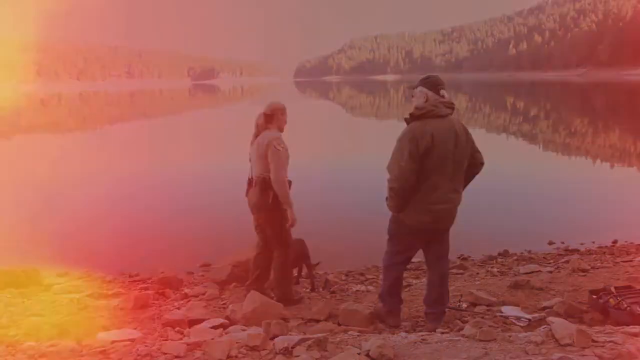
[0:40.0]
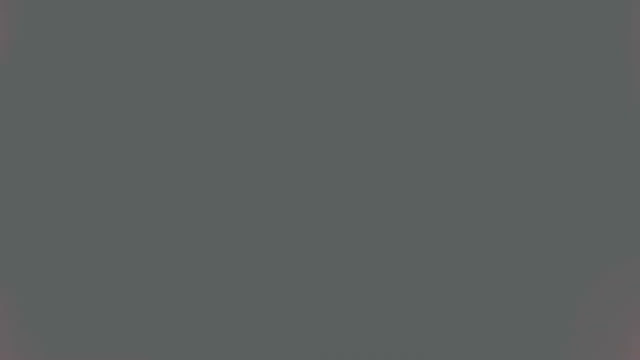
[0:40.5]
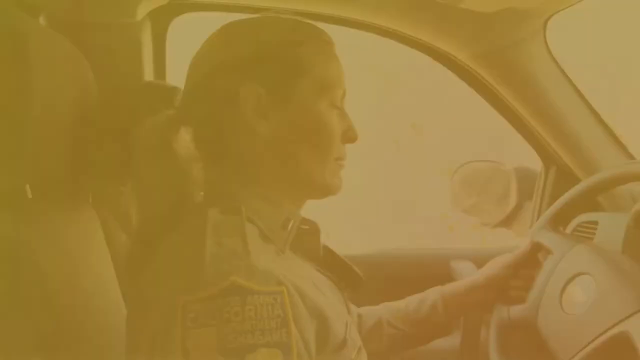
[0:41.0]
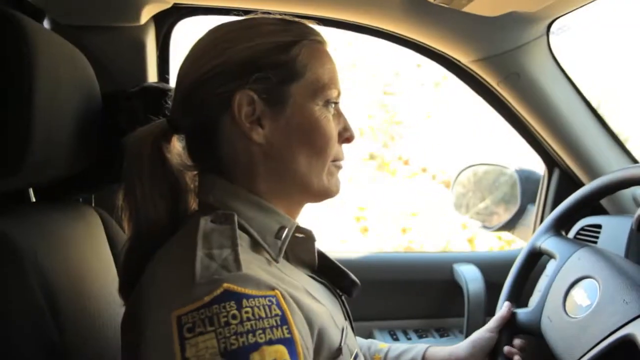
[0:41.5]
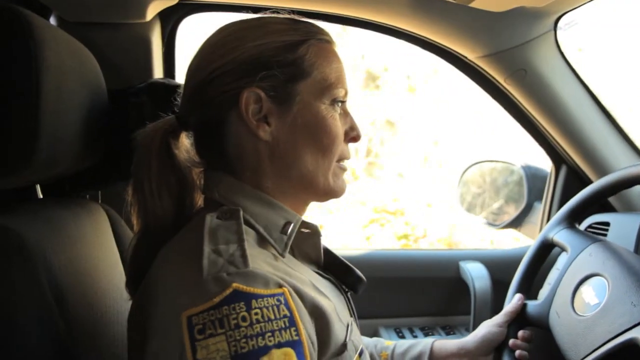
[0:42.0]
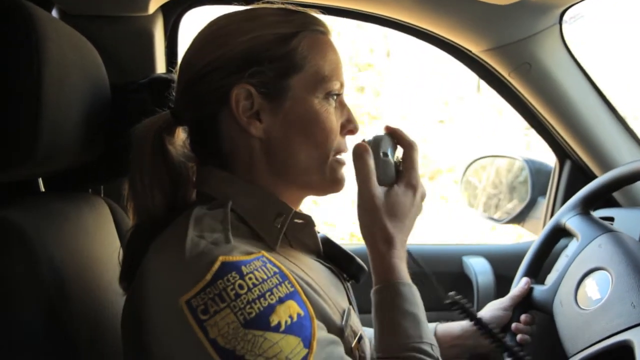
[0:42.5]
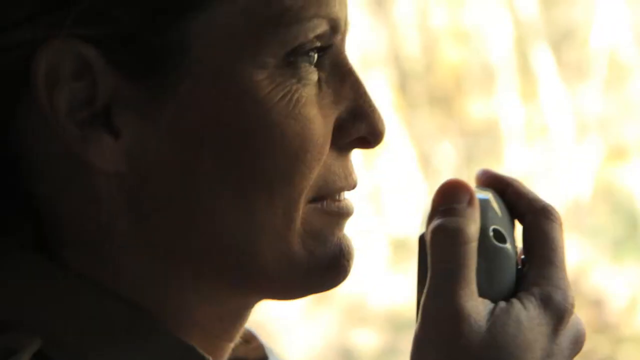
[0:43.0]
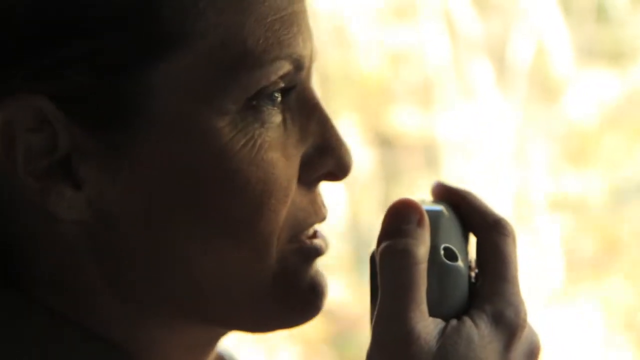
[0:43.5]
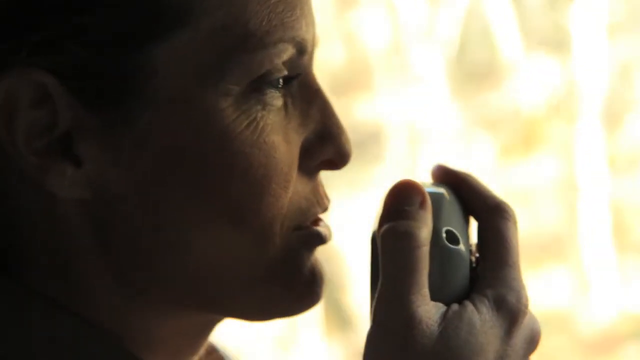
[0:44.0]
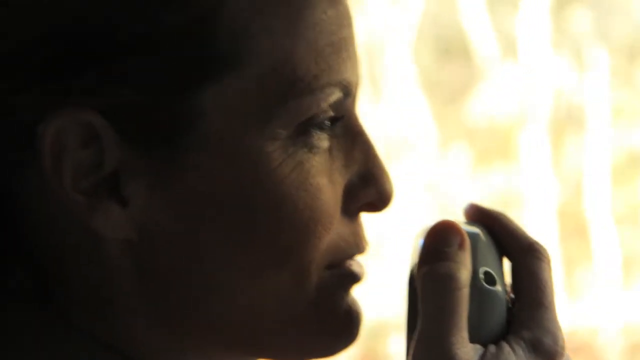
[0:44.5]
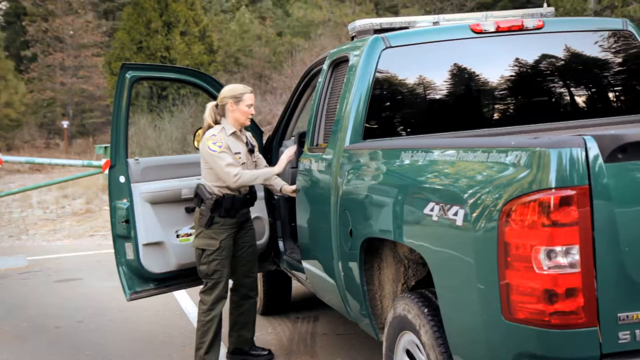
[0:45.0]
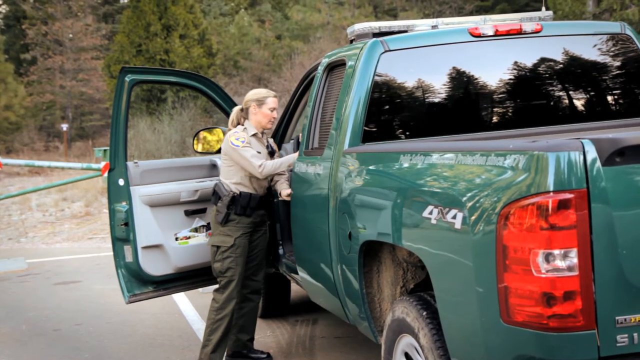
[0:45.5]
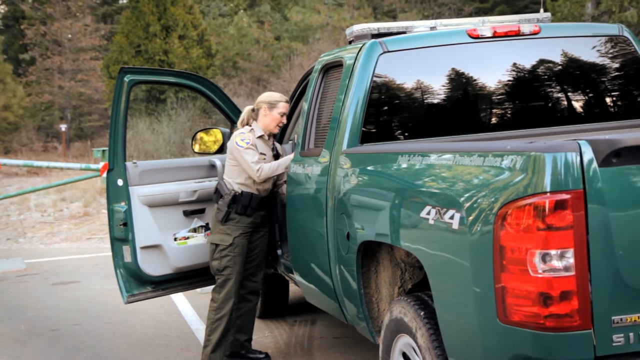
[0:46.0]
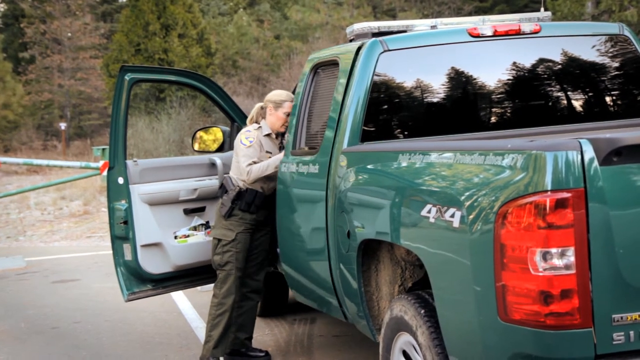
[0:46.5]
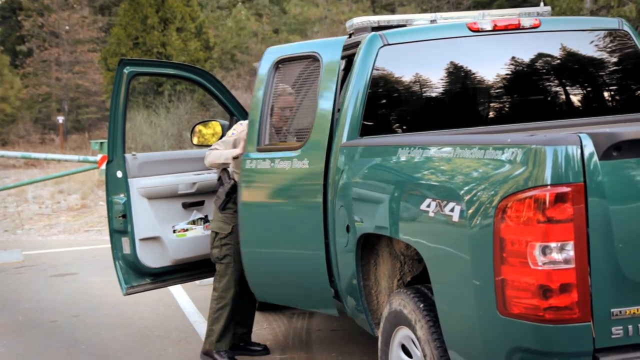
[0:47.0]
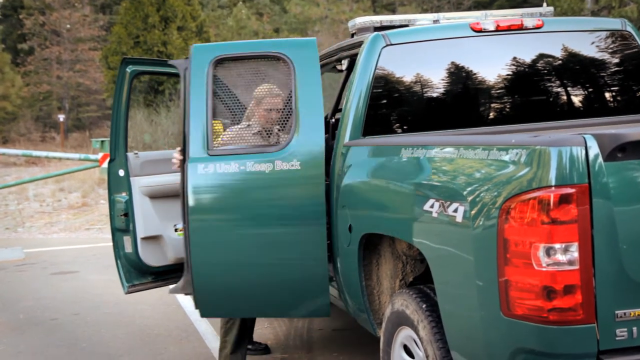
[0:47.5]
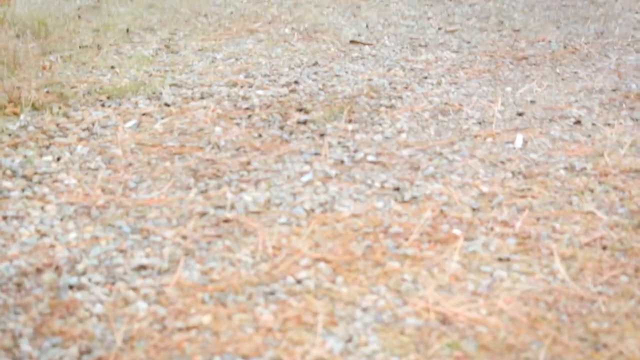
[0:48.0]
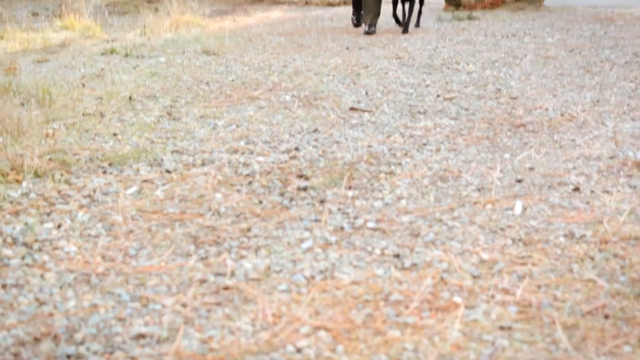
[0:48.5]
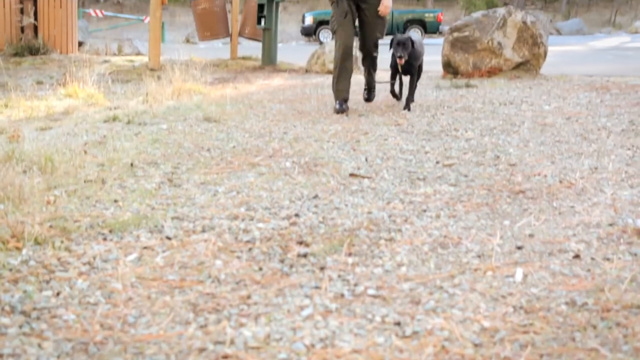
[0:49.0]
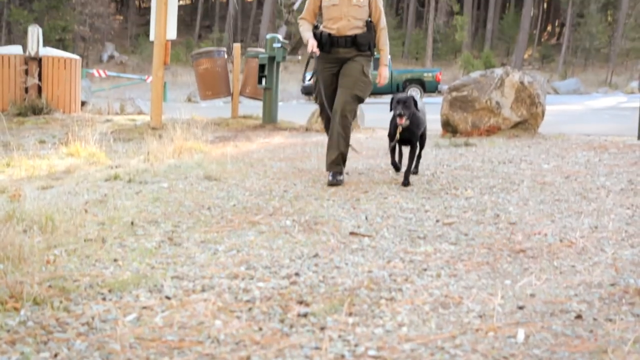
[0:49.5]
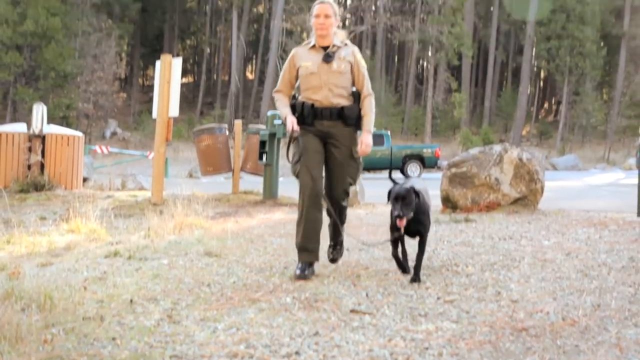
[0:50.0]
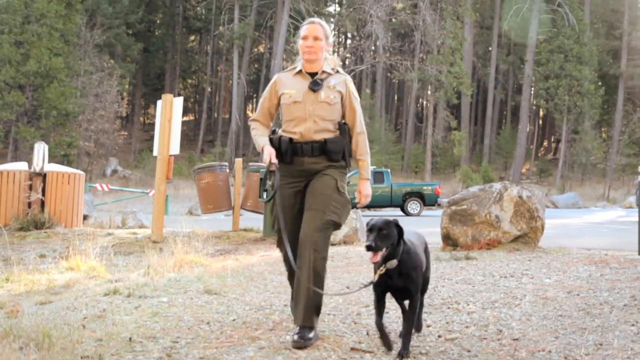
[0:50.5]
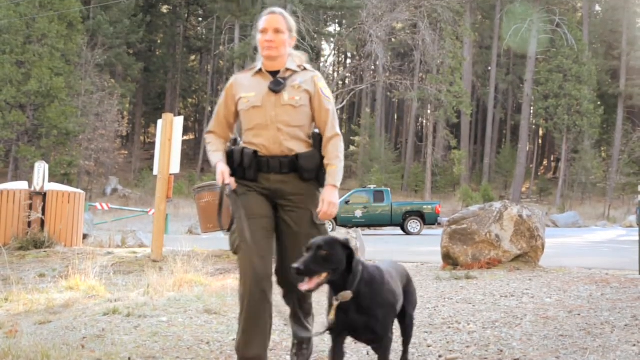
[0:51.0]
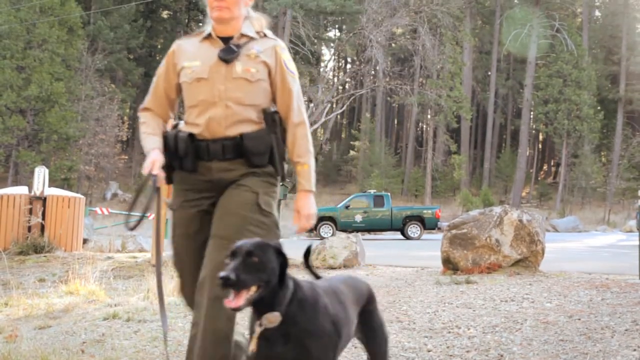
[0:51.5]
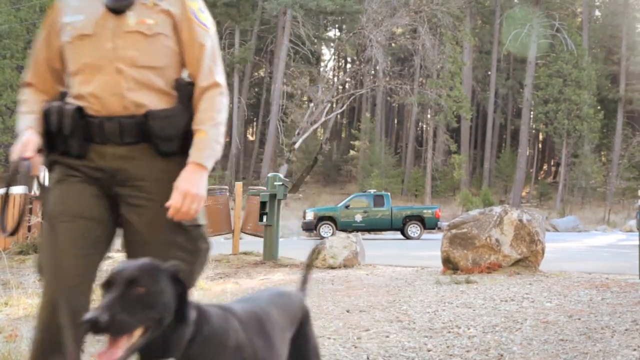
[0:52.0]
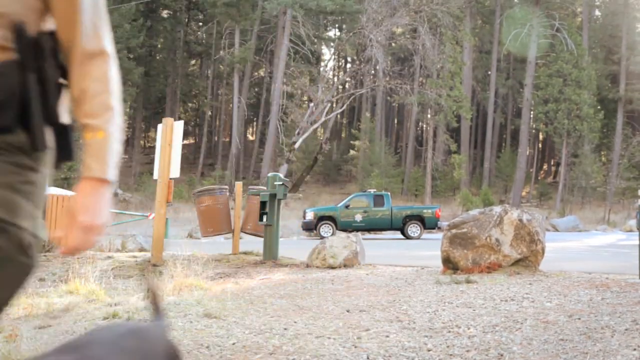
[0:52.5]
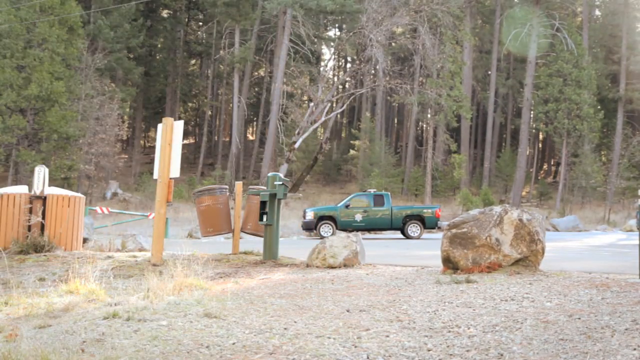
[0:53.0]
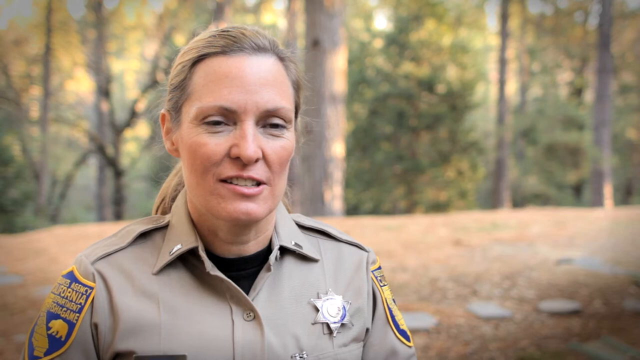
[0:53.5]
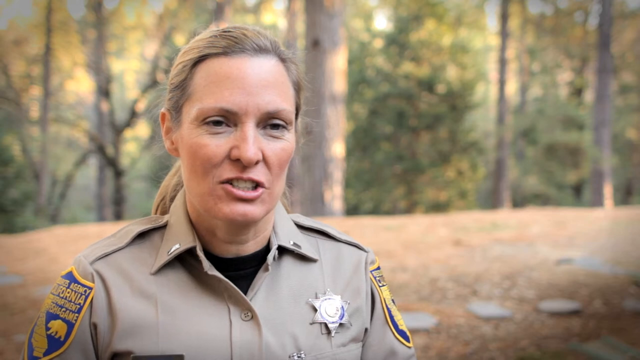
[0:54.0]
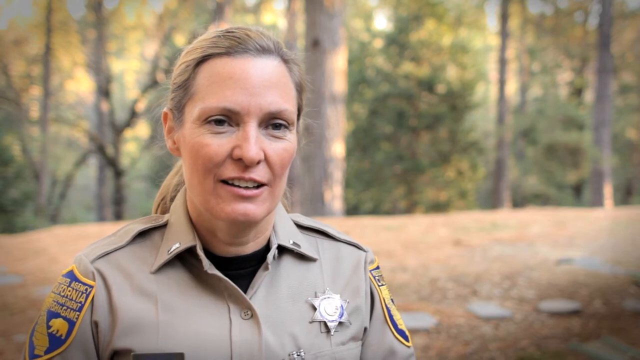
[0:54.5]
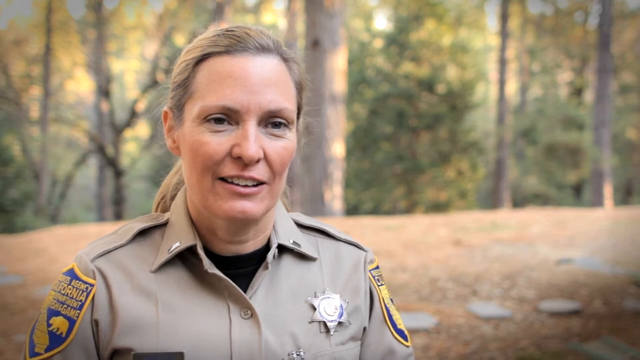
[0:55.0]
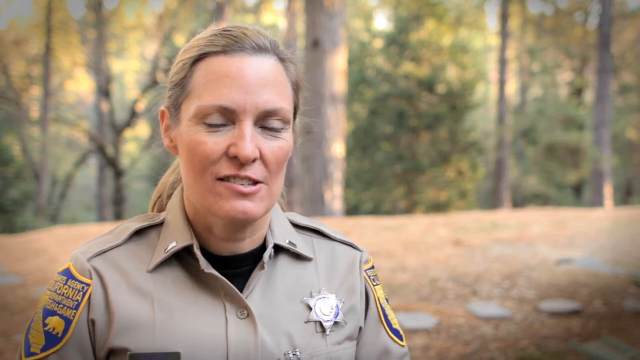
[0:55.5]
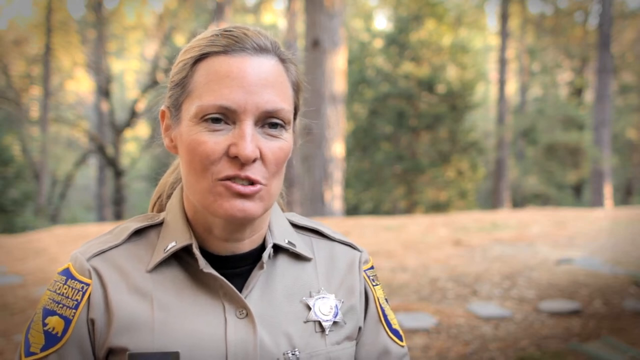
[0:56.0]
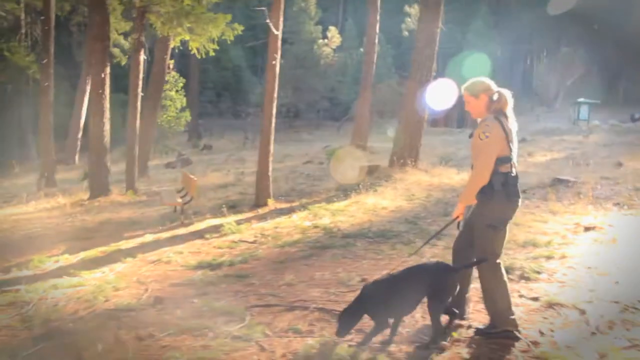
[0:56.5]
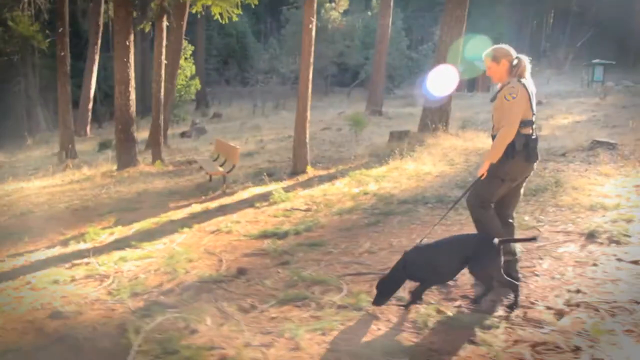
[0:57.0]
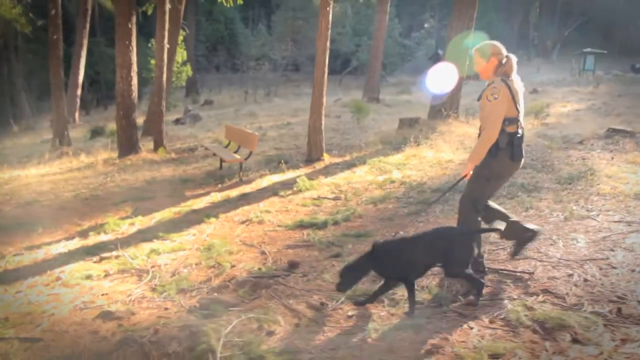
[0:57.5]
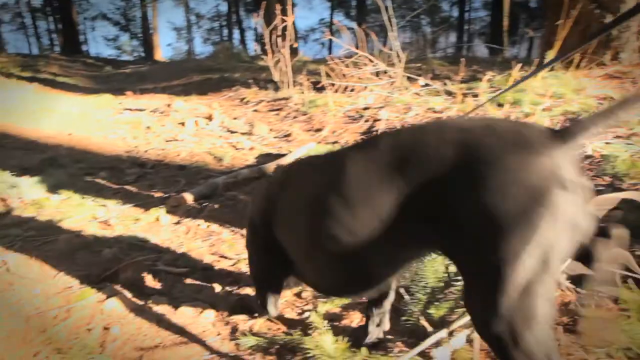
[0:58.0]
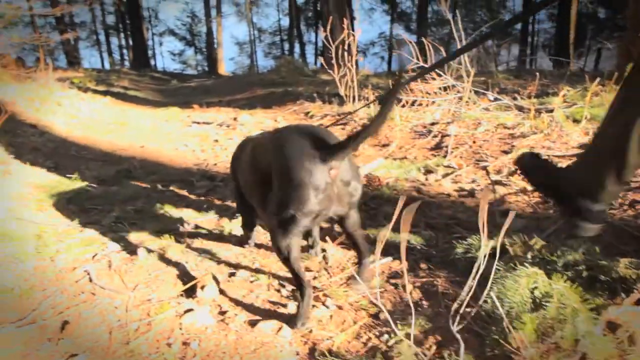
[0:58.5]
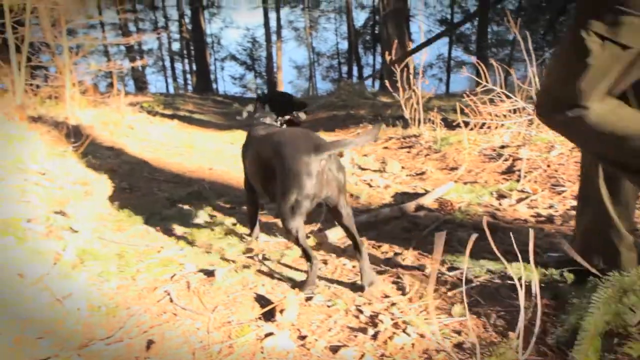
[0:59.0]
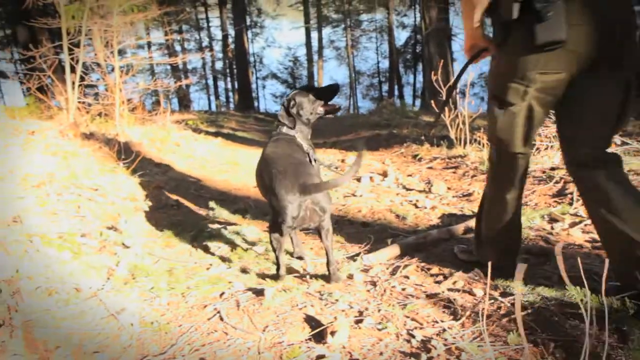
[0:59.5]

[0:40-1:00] Christy is back in her vehicle using a walkie-talkie, apparently to report information back to the station. She gets out of her truck, which has no visible markings on the outside from the back angle. It is a turquoise color with sirens on top, and it looks very shiny and freshly washed. Christy walks the black lab into a parking lot that has large boulders near the parking area, along with trash cans and some signs. Christy's green truck is parked on the road behind her. She wears a large duty belt that seems to have gear in it. She is seen again talking to the camera in front of the large wooded area. The dog she is handling wears a small harness or collar with some text on top of it.